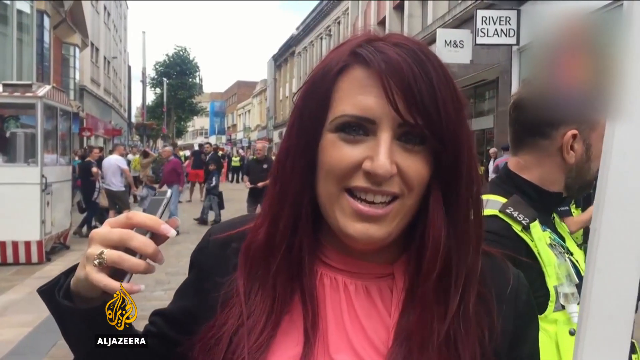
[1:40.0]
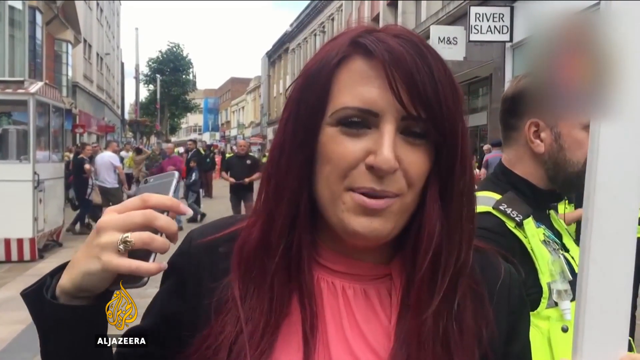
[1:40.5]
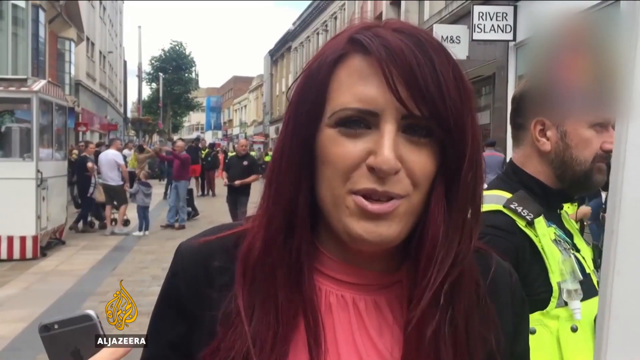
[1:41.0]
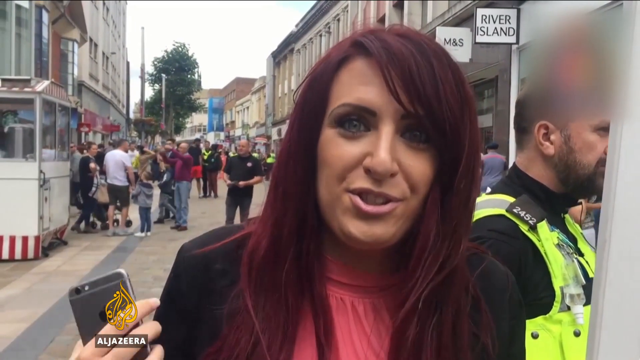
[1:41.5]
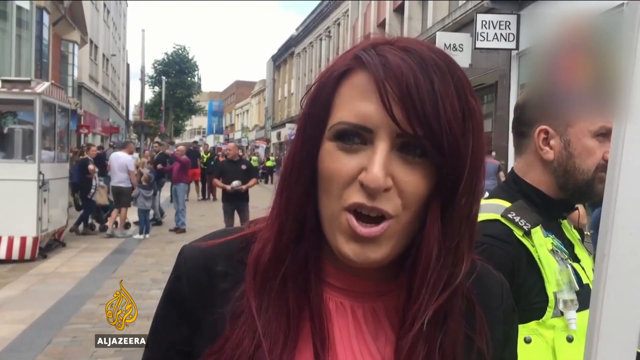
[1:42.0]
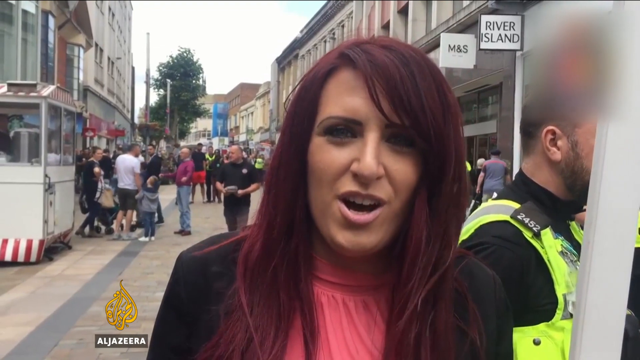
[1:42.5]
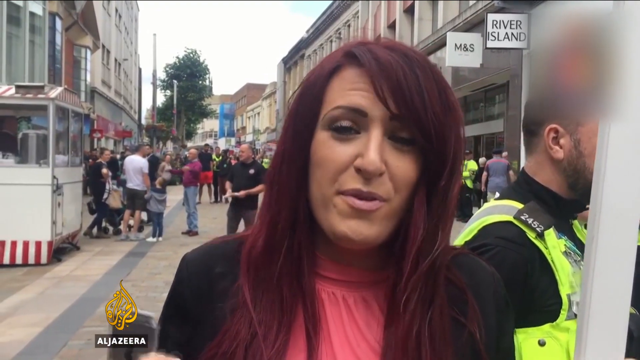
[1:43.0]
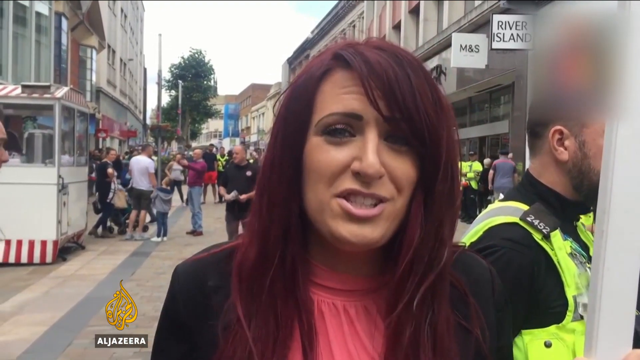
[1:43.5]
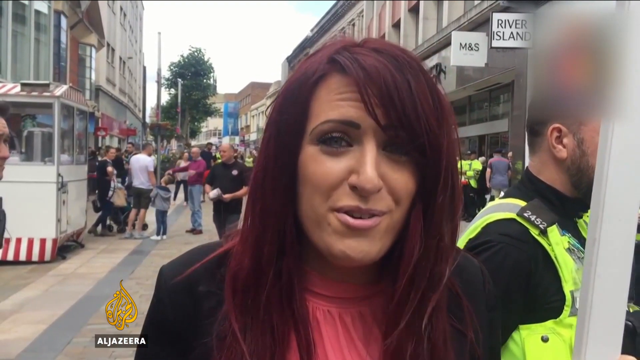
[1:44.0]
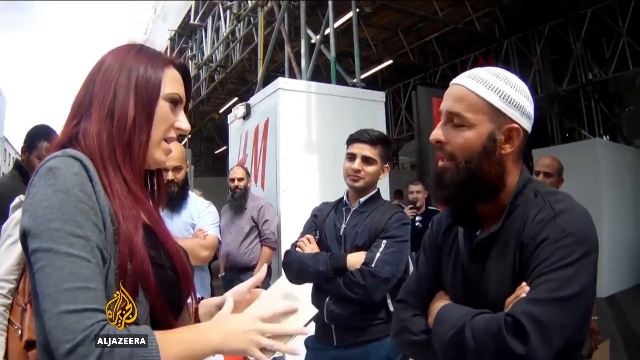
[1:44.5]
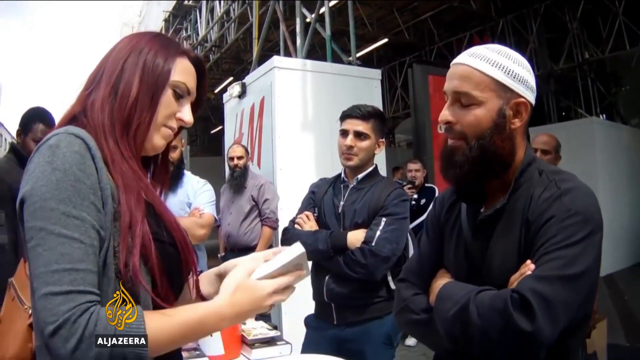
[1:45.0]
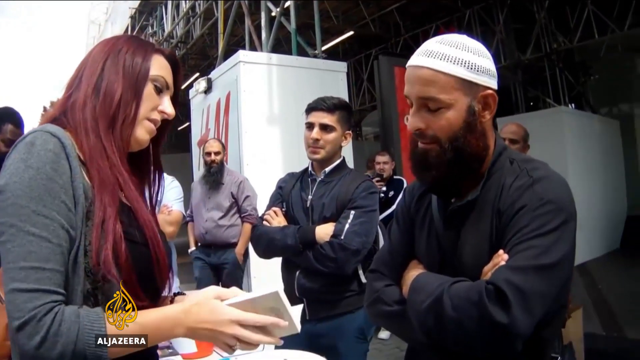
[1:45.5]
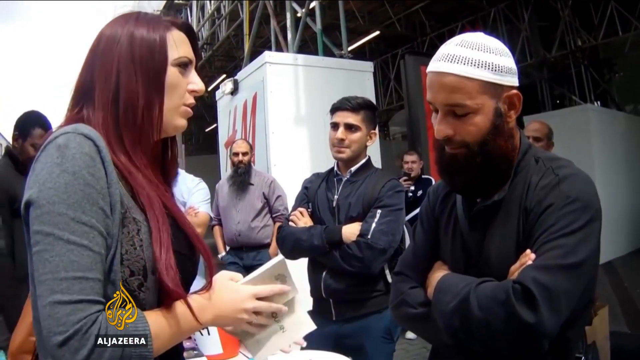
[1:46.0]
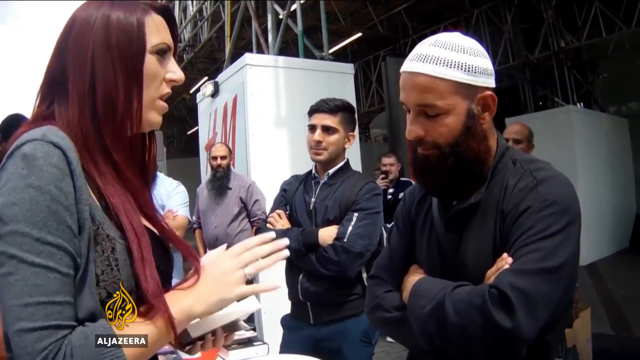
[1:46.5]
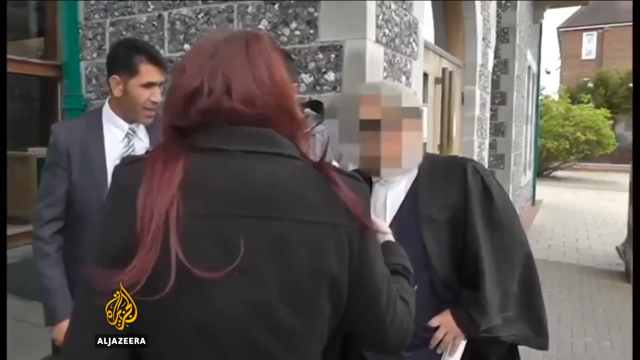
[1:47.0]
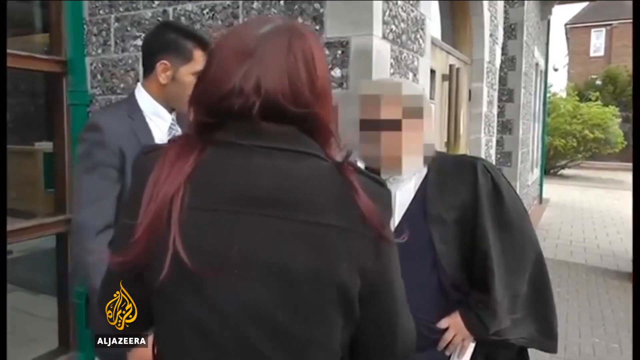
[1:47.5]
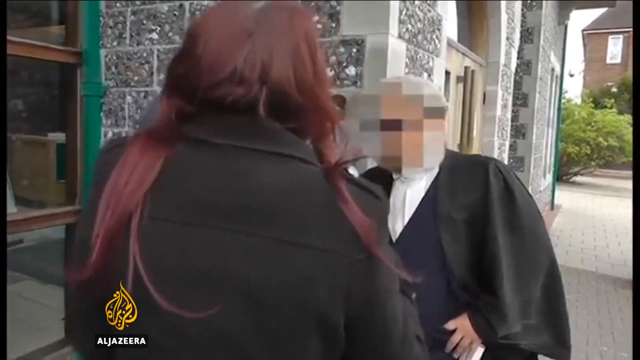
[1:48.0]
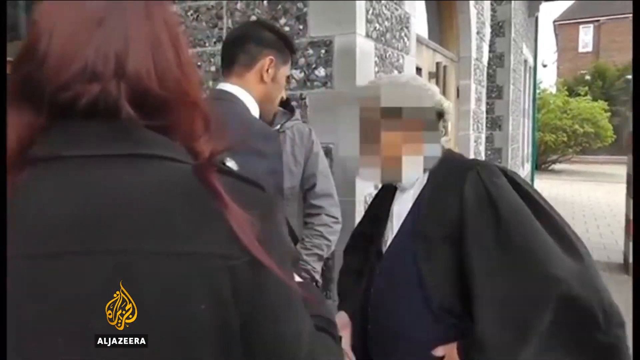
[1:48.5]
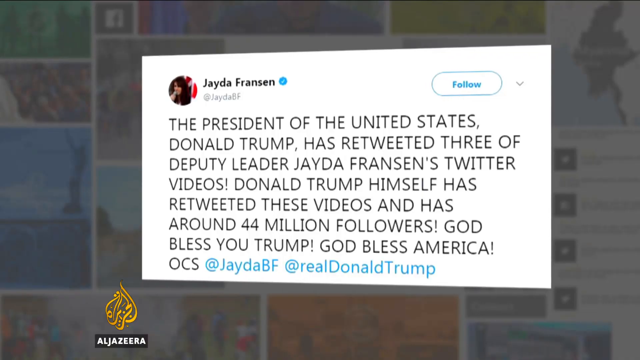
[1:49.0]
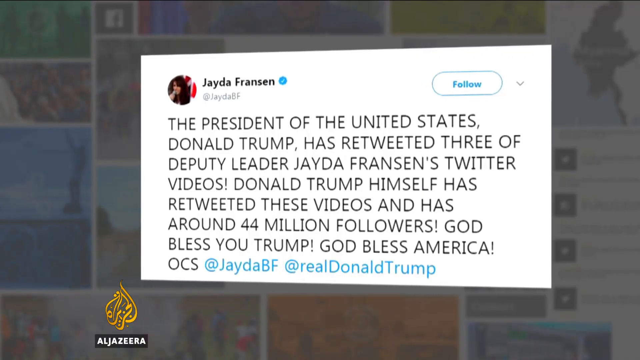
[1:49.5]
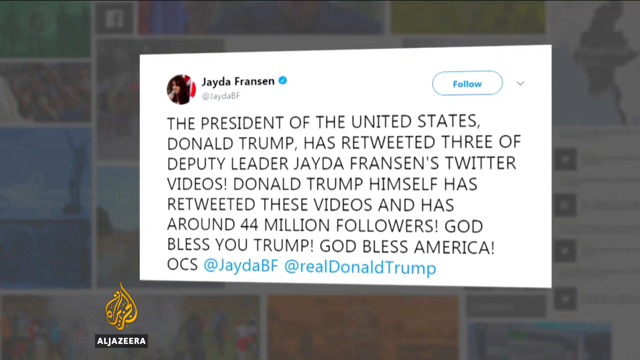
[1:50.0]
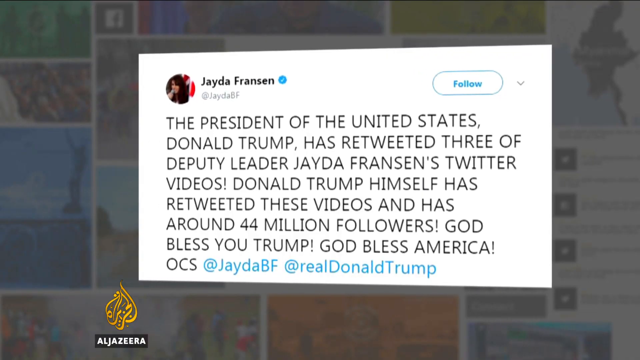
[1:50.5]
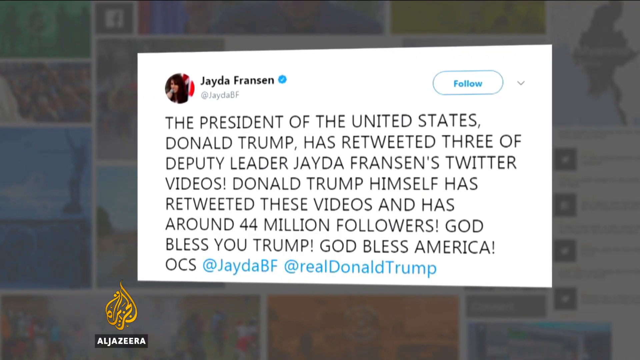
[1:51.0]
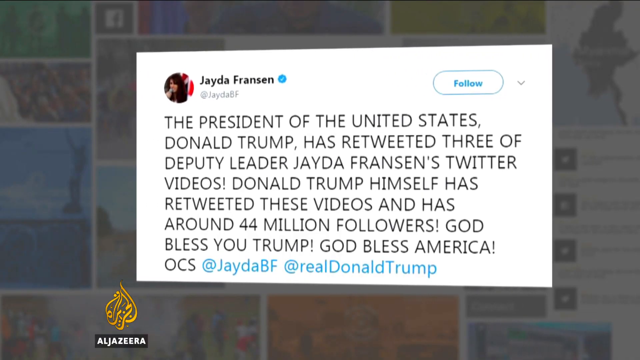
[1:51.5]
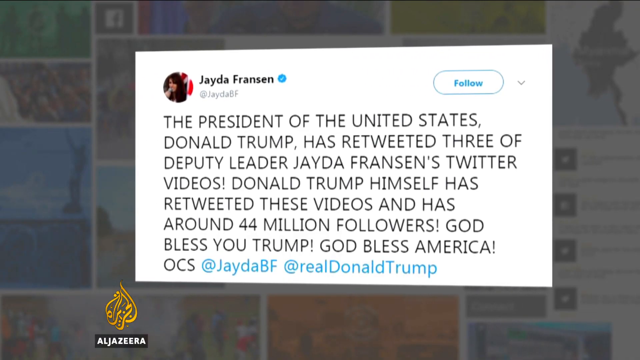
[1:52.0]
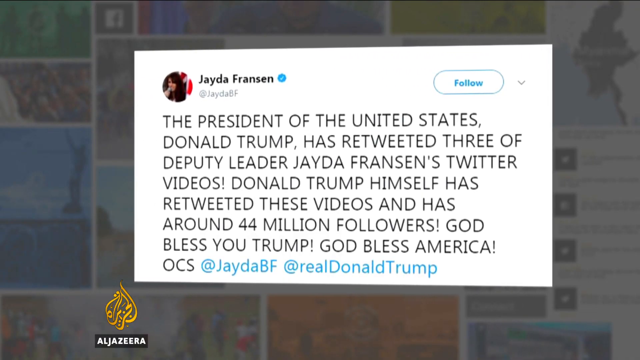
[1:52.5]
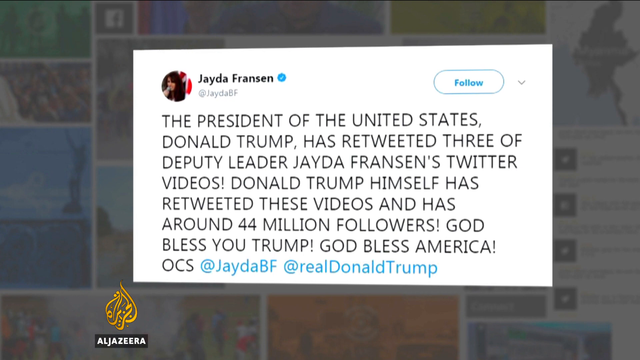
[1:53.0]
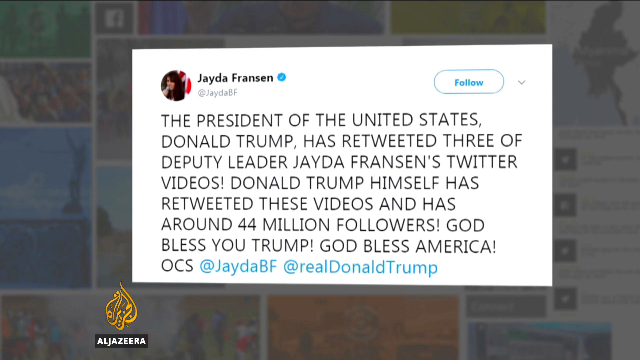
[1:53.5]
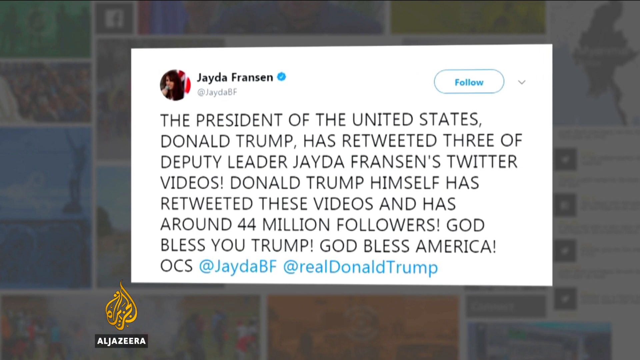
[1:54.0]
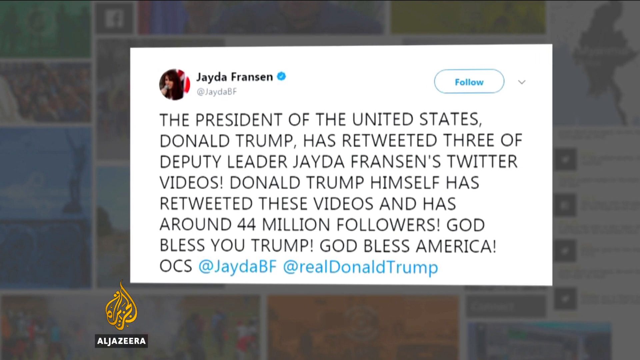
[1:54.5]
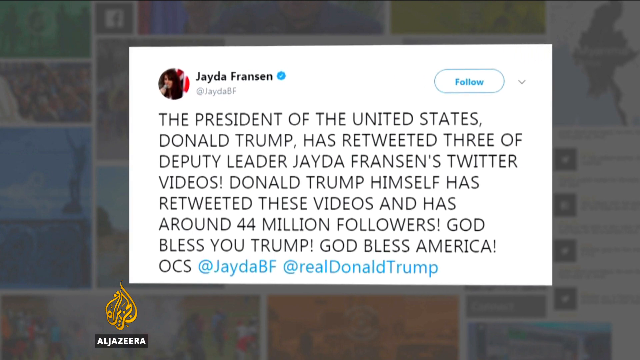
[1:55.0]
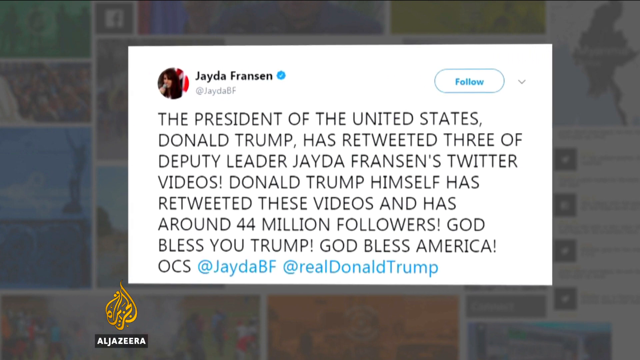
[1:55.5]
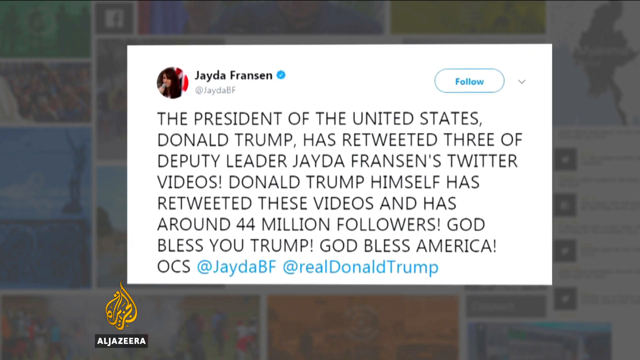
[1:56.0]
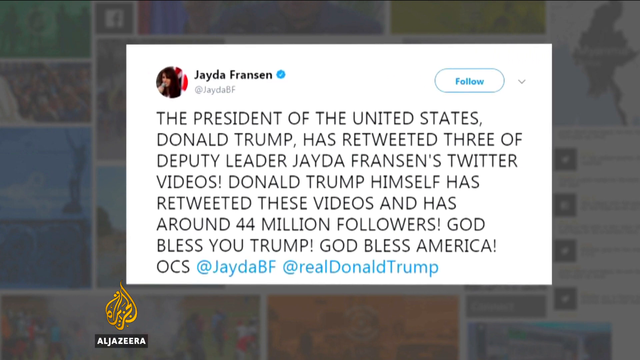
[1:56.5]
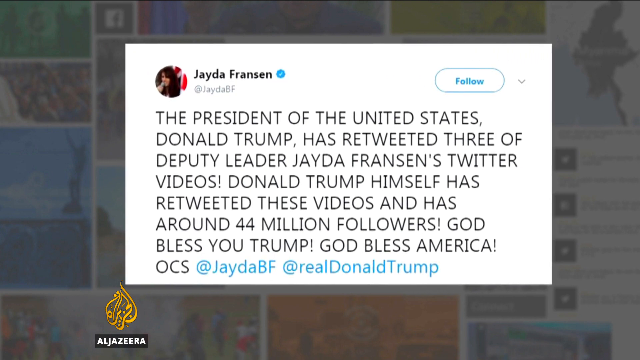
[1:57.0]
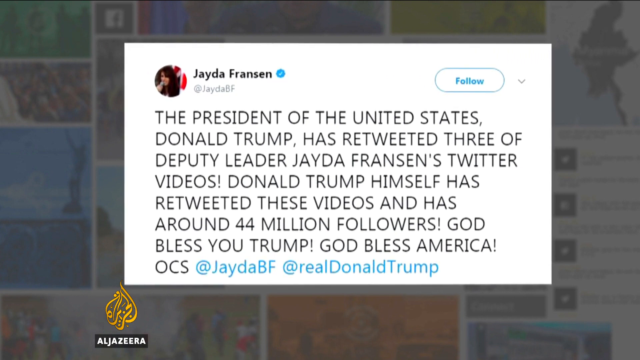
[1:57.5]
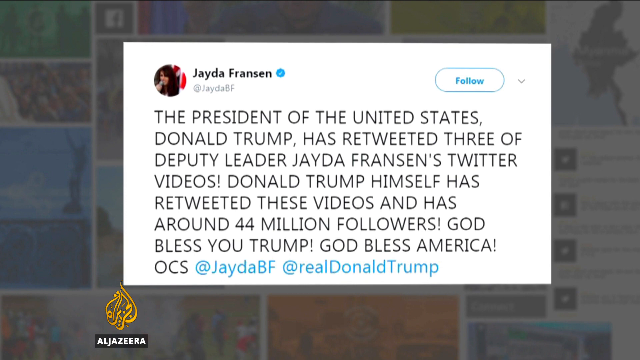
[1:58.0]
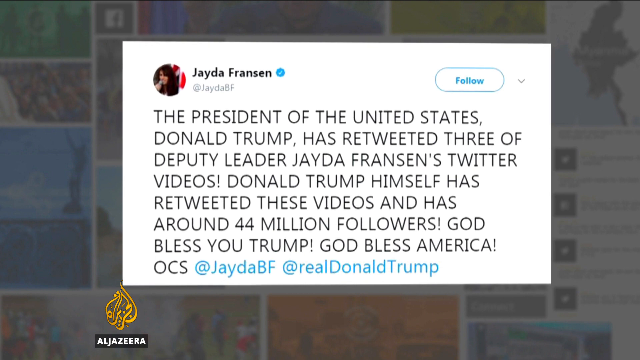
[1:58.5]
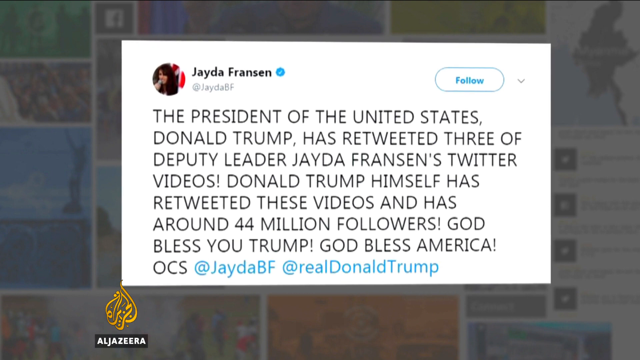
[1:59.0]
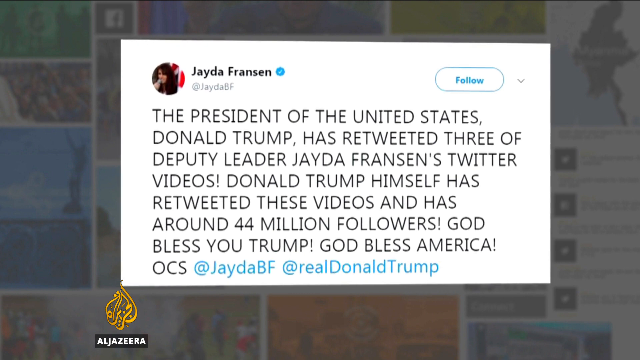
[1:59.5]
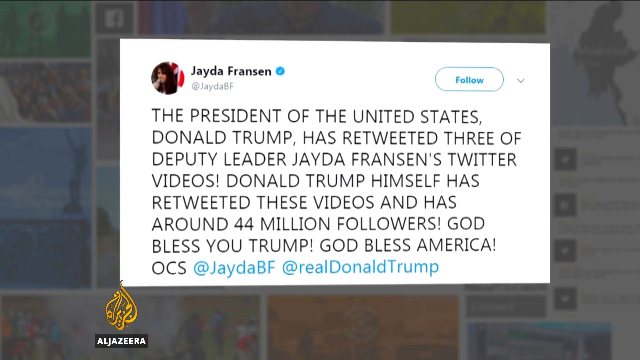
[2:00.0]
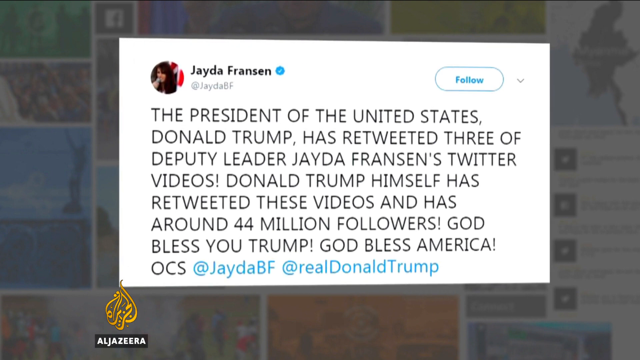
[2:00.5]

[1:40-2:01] A street interview shows a woman with long, purplish red hair, her bangs parted to the left. She wears a black jacket with a pink shirt underneath and holds a cell phone up high in her left hand, facing toward her; she seems to be gesturing with the hand holding the phone, lowering and raising it as she talks. The view then changes to the camera behind the woman as she talks to people on the street, with faces blurred out. The right side of her hair hangs down, while on the left she has it pulled in front of her. A man on the left in front of her has his face blurred, and a man on the right wears a suit; his face is not blurred but is obscured by her head. A tweet appears on the screen from Jada Branson, the woman in the video, about the President of the United States retweeting someone. The tweet stays stationary on the screen, and the Al Jazeera logo is stationary at the bottom left.